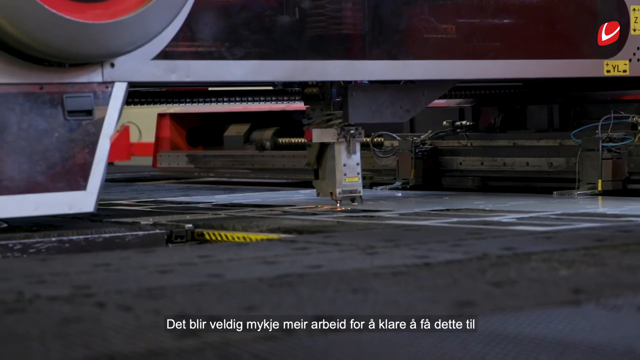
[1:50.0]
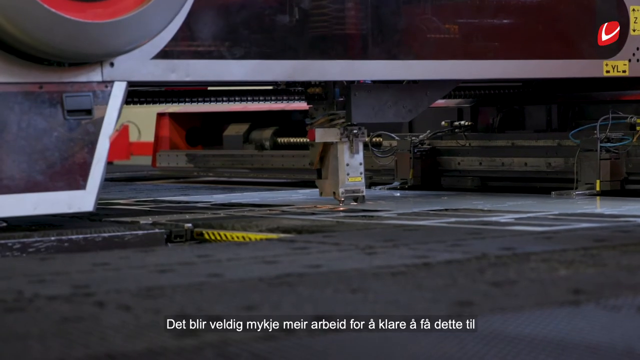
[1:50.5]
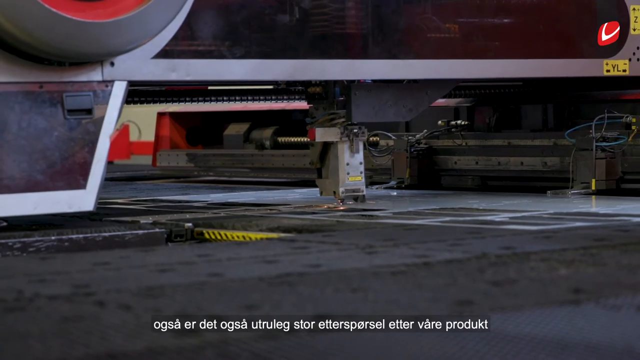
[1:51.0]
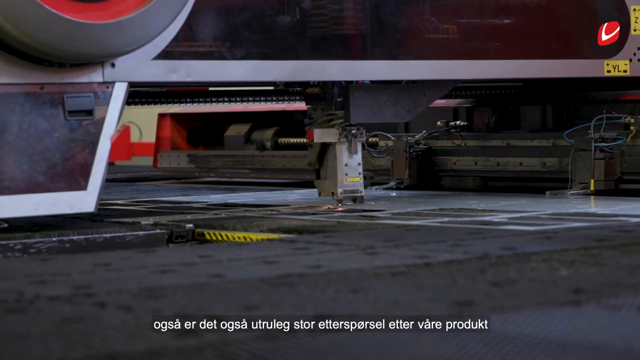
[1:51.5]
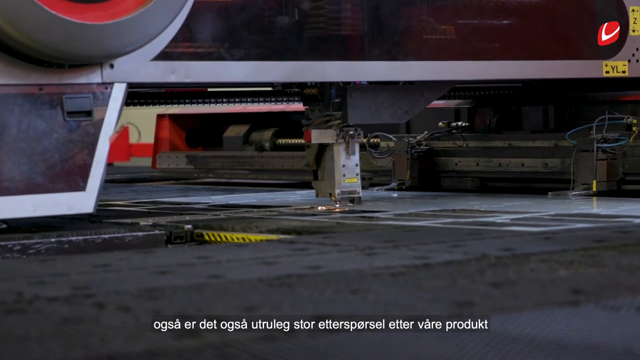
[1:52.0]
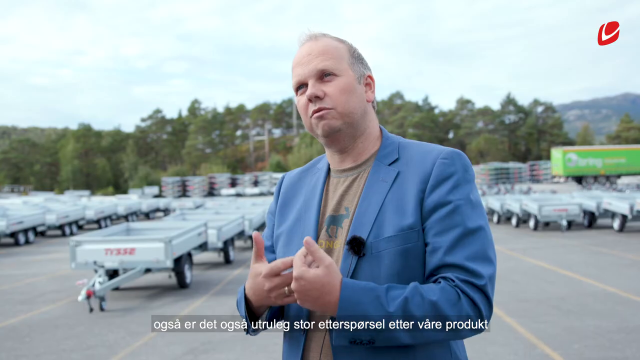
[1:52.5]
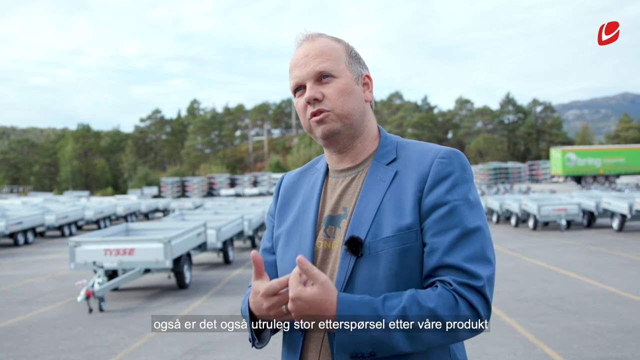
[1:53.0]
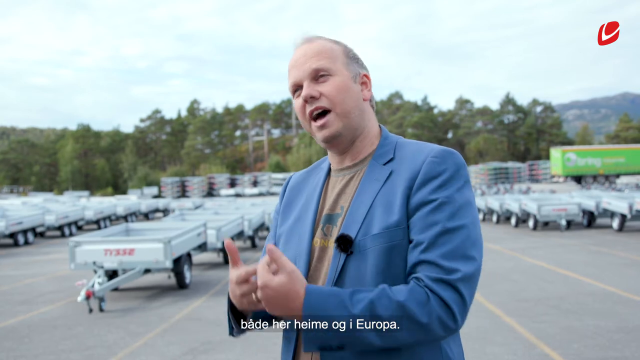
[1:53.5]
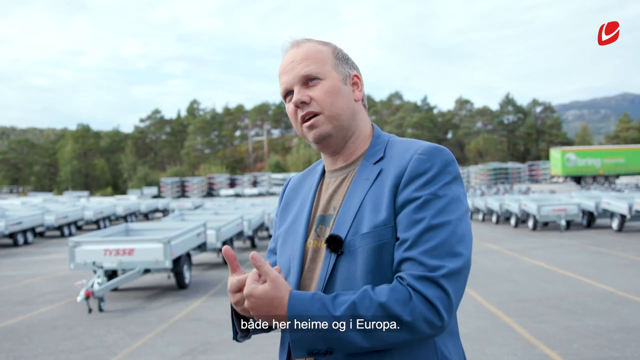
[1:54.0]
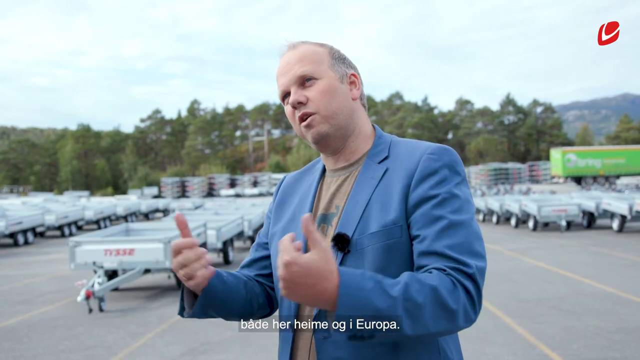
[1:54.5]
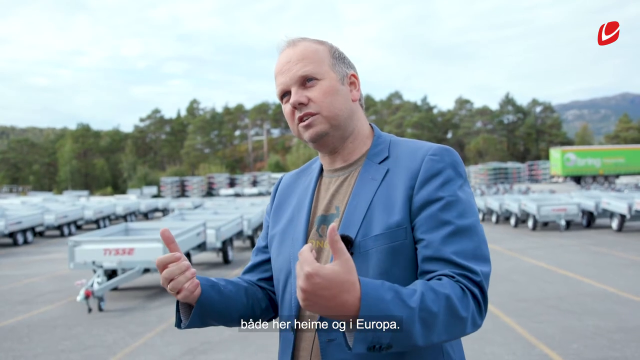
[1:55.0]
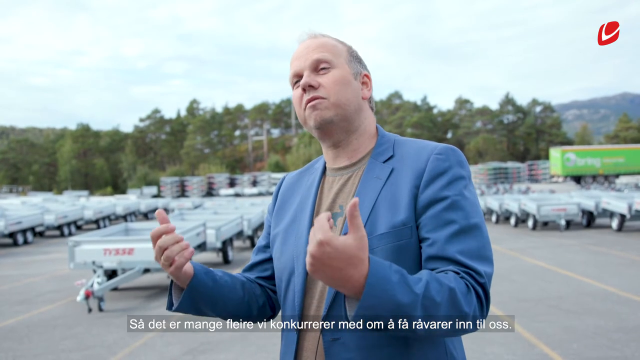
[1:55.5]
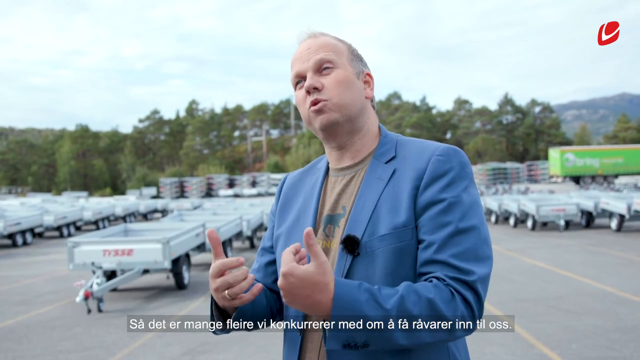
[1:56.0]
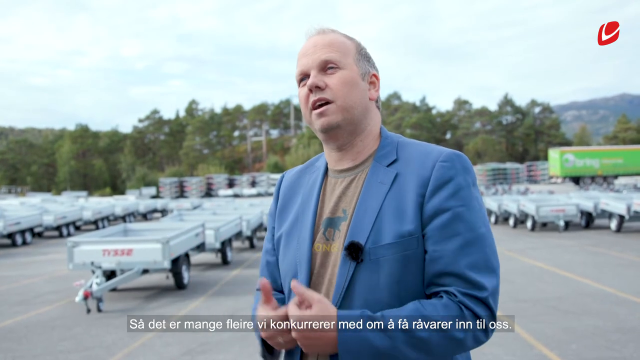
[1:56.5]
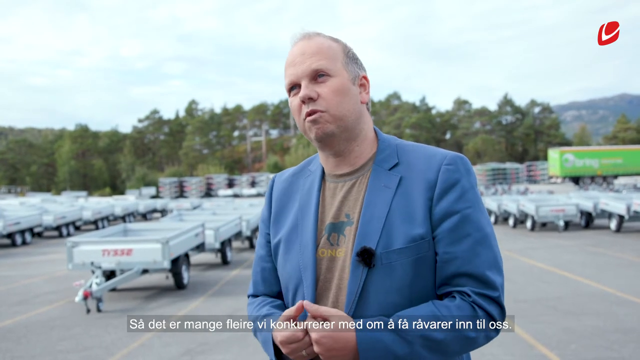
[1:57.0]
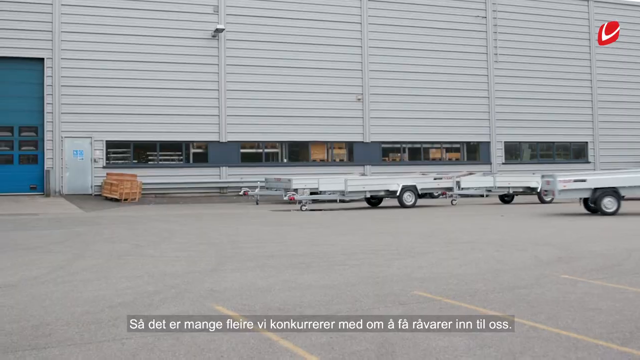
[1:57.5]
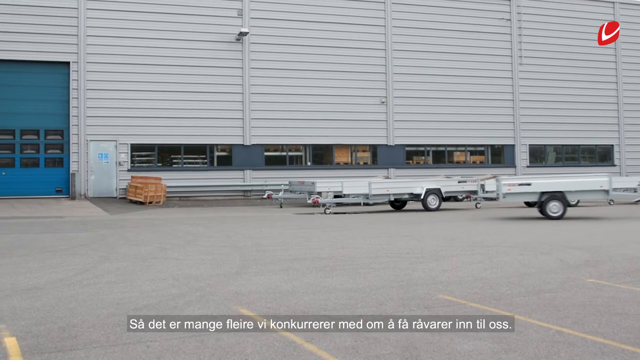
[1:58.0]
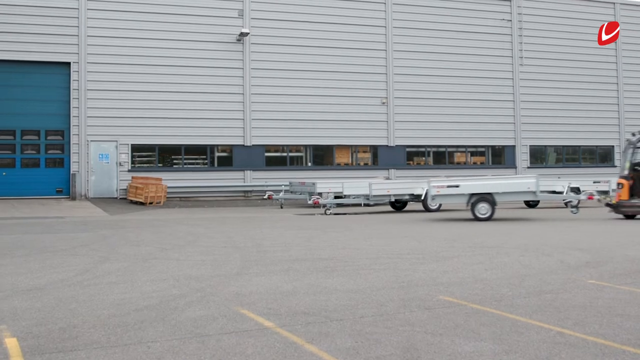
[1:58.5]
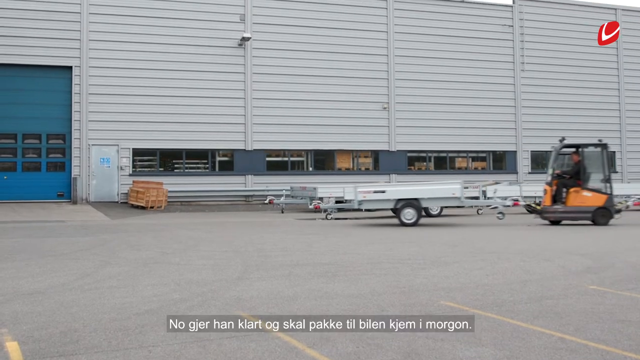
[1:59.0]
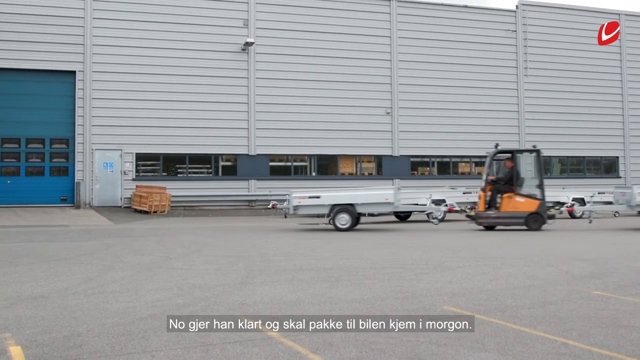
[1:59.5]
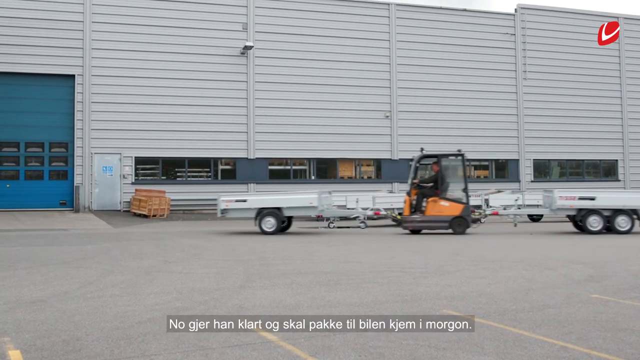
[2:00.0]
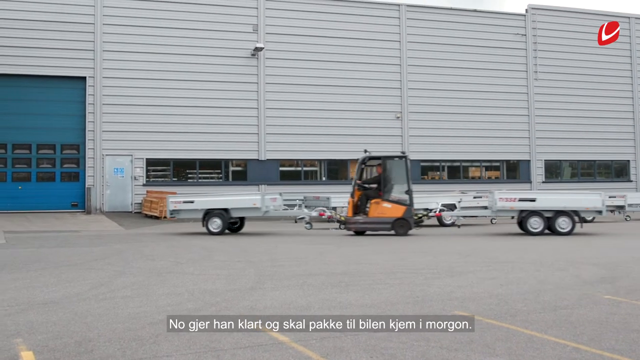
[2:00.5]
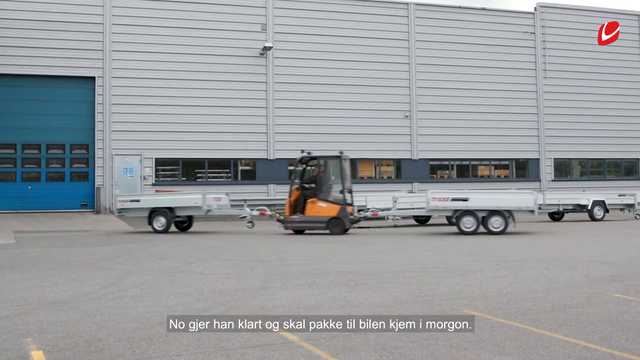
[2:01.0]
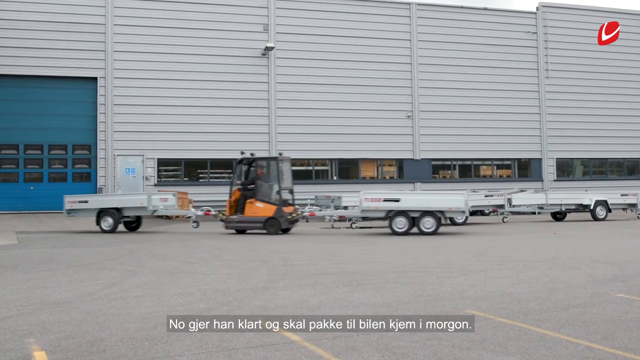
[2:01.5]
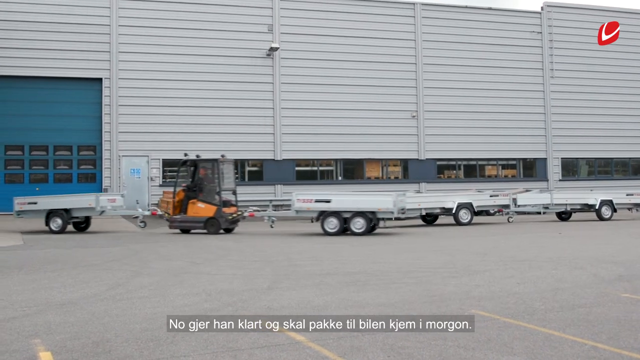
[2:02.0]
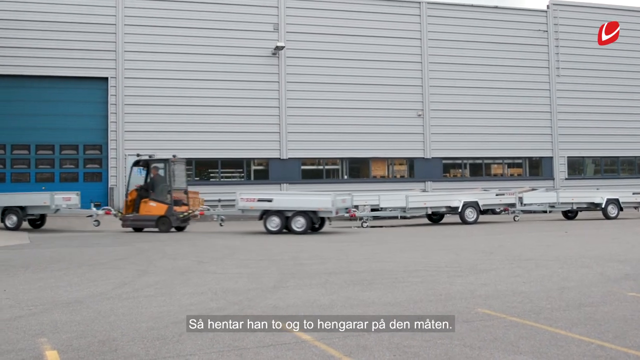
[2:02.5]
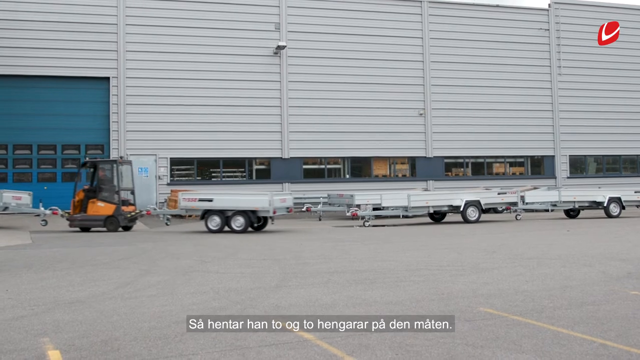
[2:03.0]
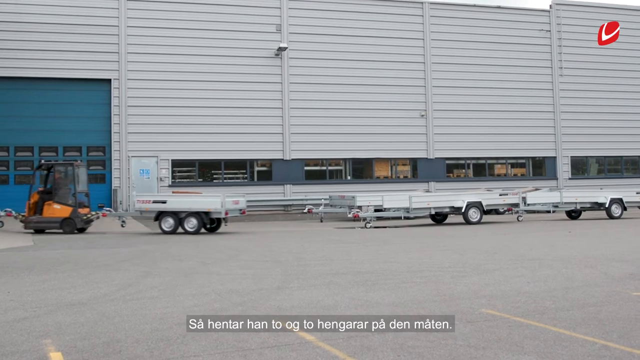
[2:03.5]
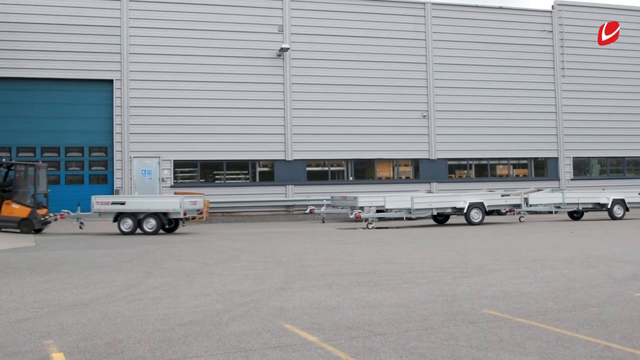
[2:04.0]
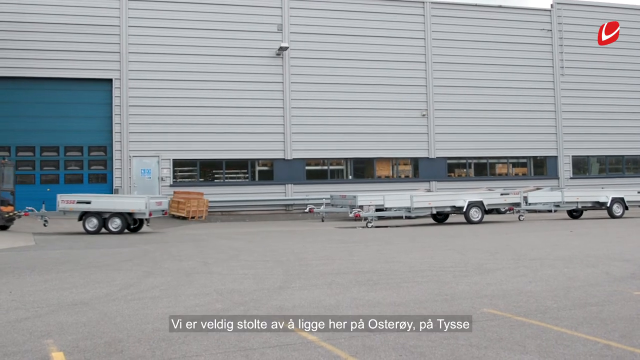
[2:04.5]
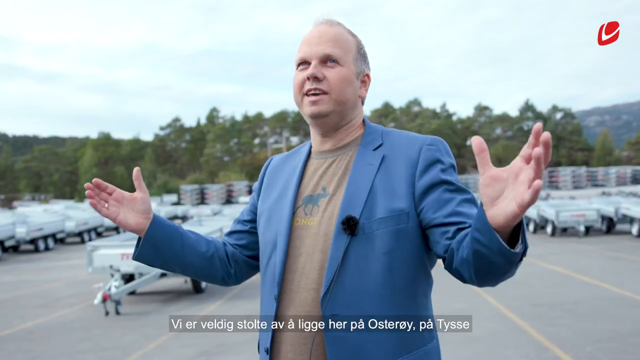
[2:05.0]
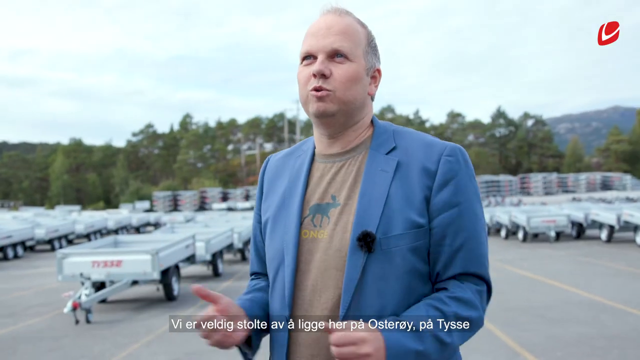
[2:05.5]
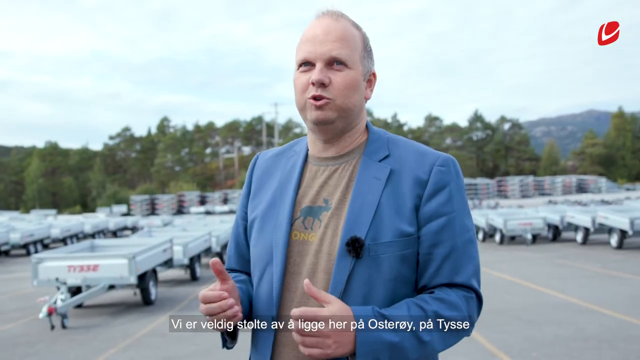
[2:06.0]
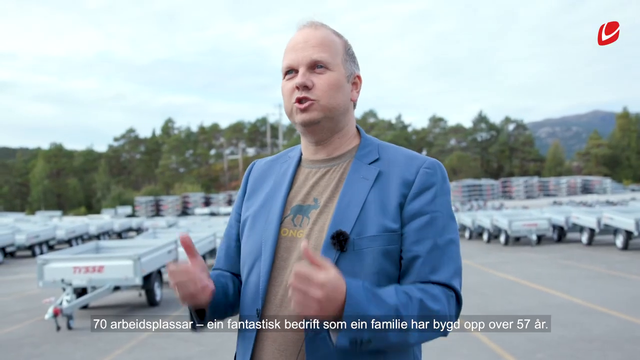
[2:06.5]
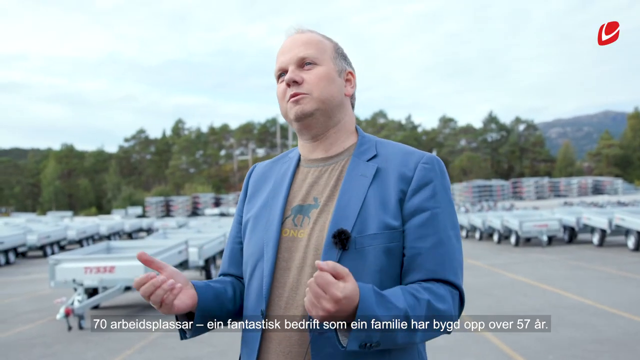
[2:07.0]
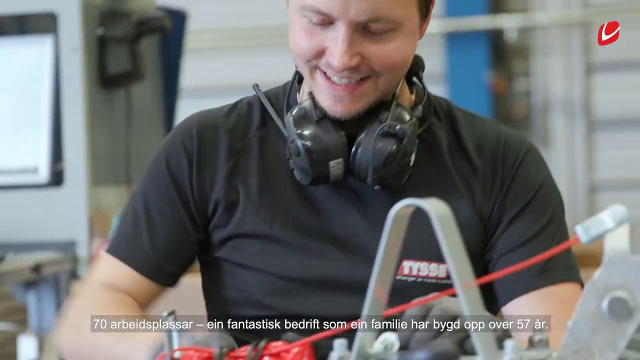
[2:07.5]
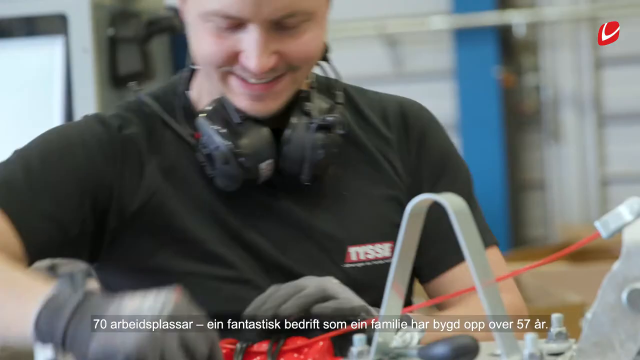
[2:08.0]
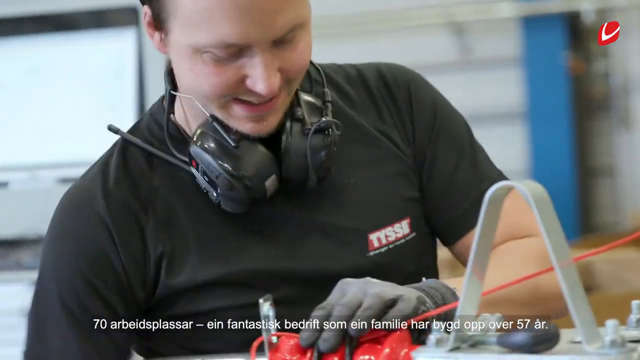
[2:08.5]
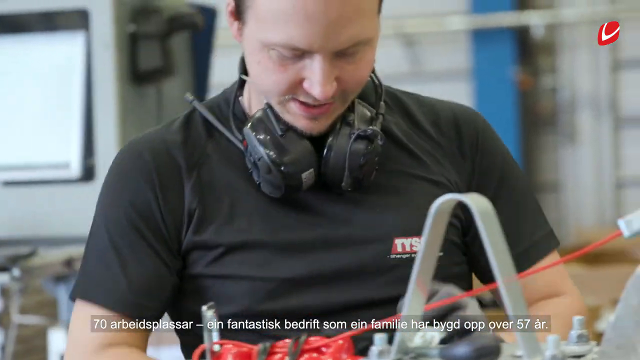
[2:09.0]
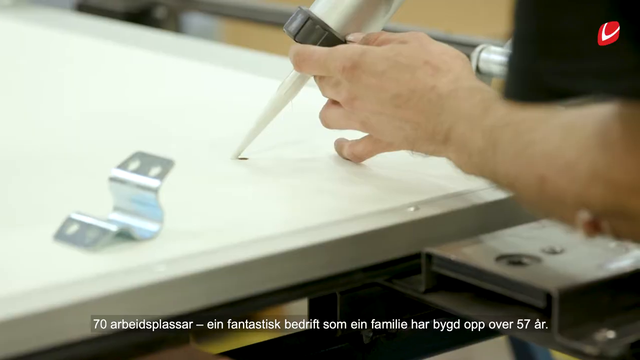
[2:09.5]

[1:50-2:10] Cords and metal pieces are shown, and a machine lifts up after some sparks. The same man appears again. Someone drives a small cart carrying the wheeled machinery the company makes, one in the front and one in the back. Someone is smiling. One of the workers appears to wear a black t-shirt.